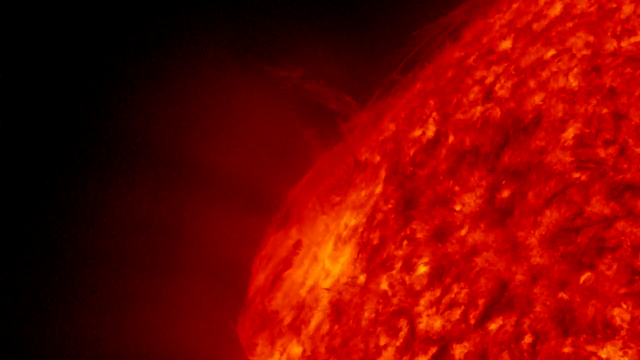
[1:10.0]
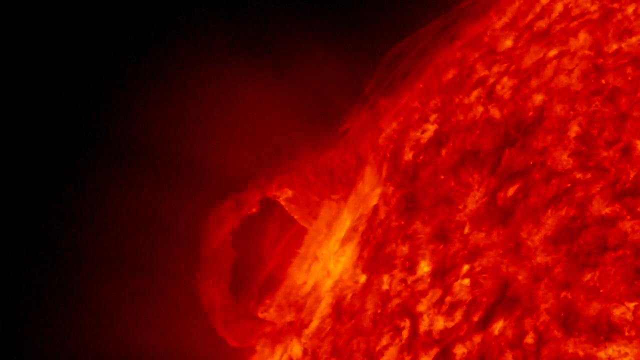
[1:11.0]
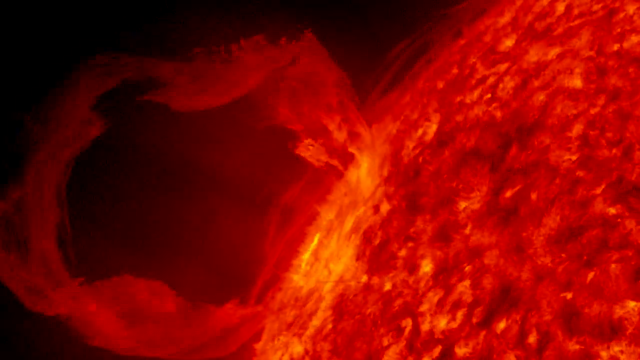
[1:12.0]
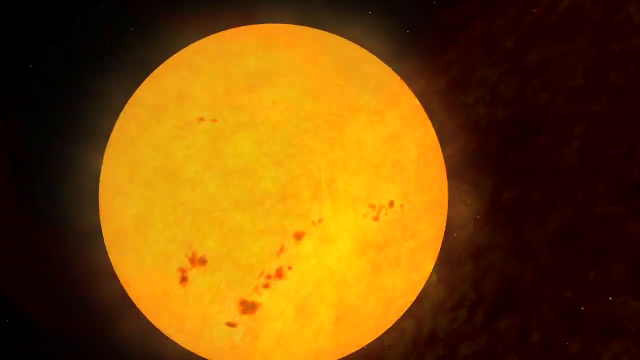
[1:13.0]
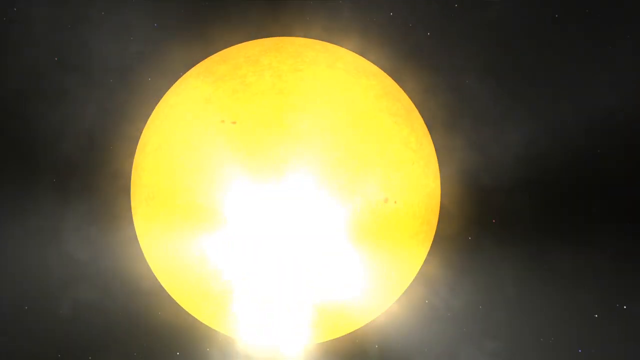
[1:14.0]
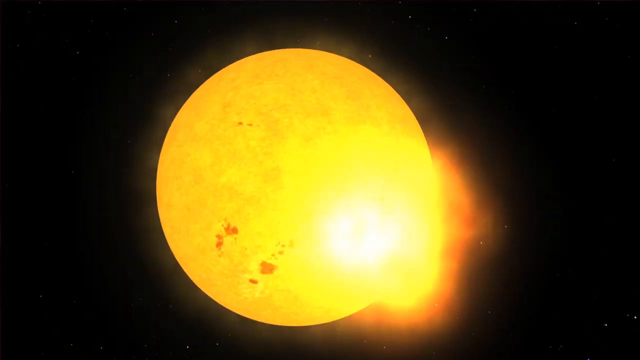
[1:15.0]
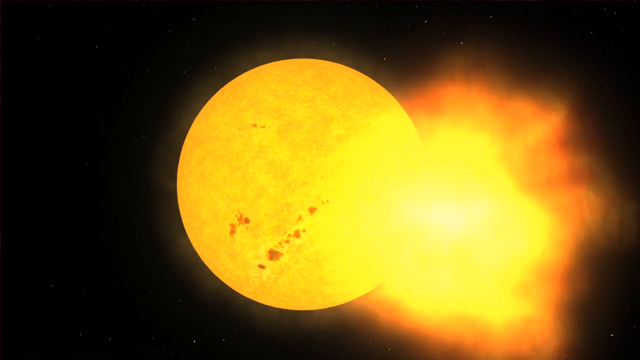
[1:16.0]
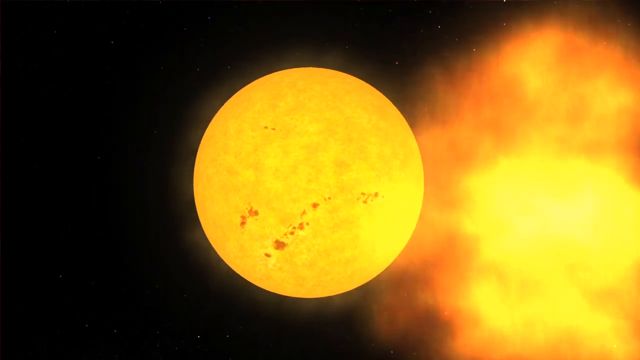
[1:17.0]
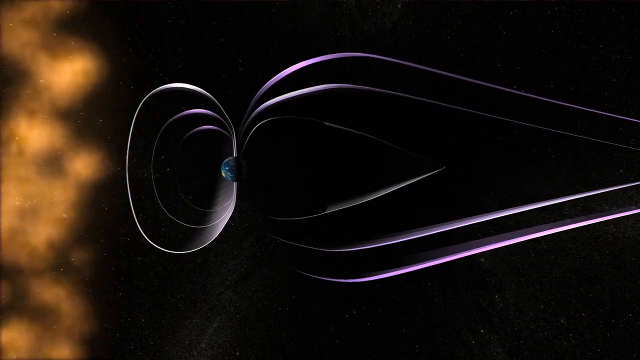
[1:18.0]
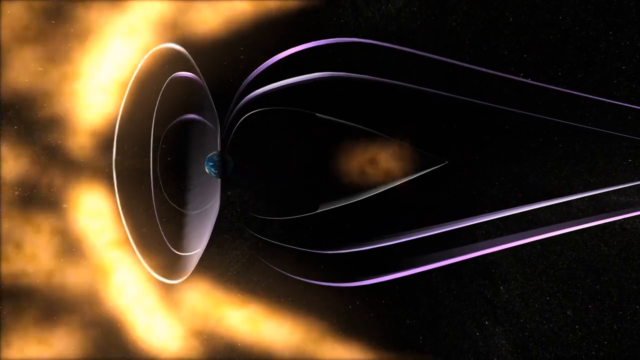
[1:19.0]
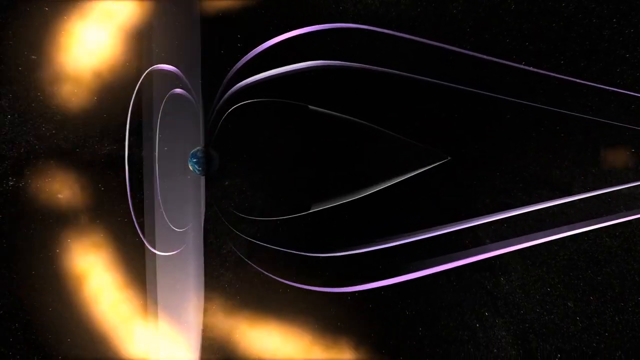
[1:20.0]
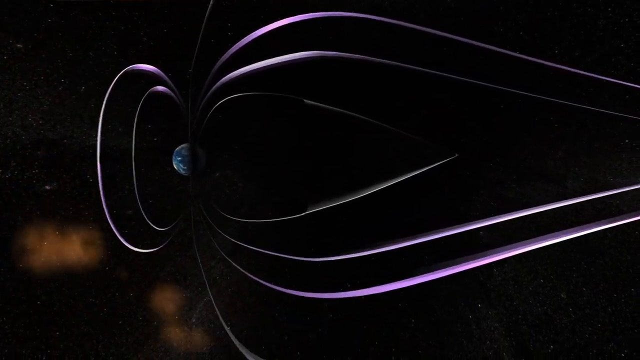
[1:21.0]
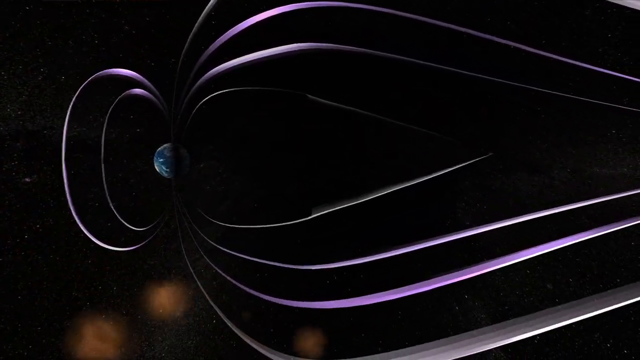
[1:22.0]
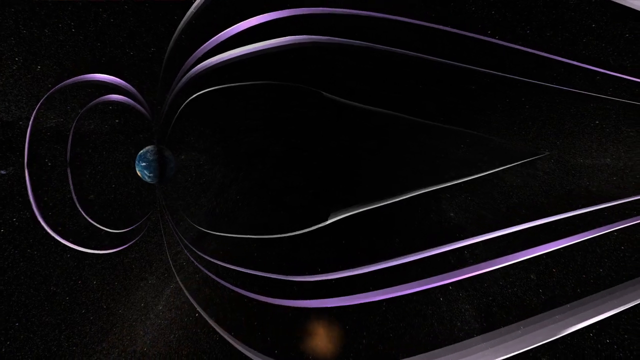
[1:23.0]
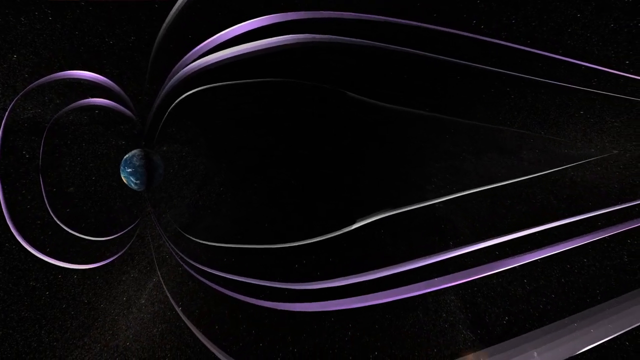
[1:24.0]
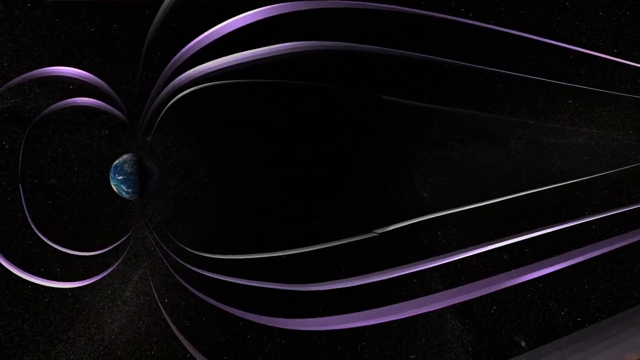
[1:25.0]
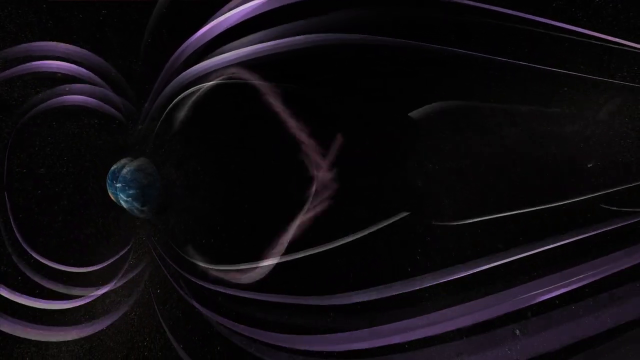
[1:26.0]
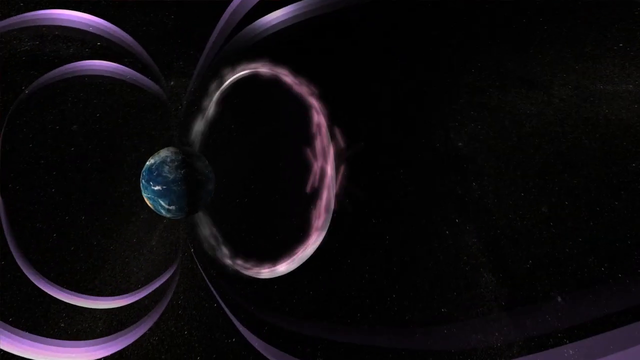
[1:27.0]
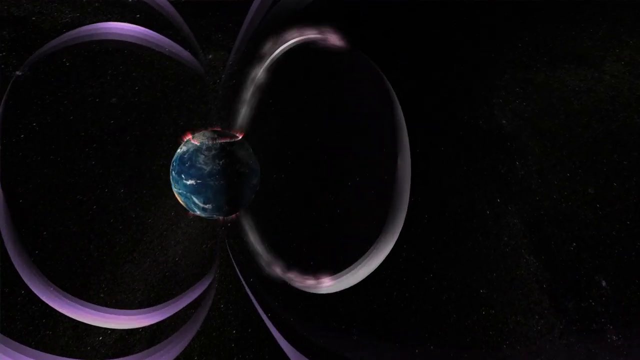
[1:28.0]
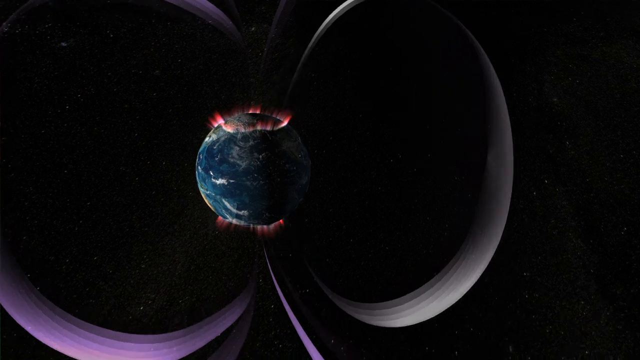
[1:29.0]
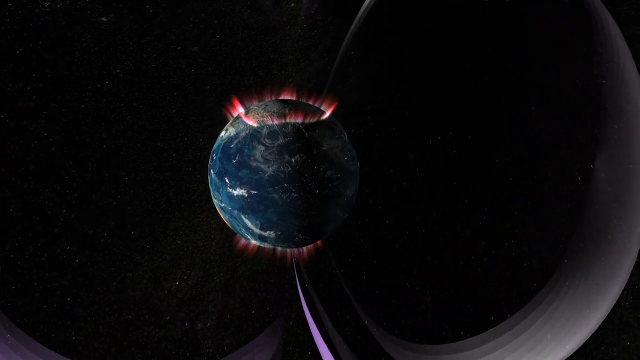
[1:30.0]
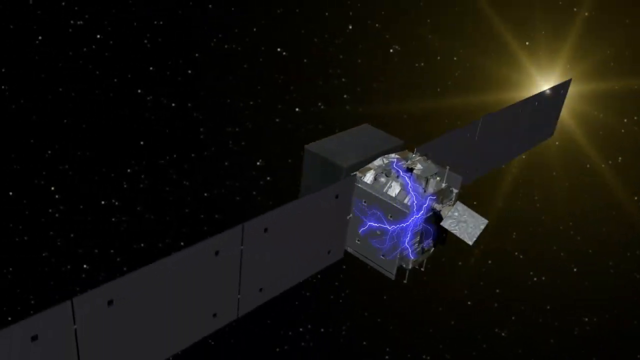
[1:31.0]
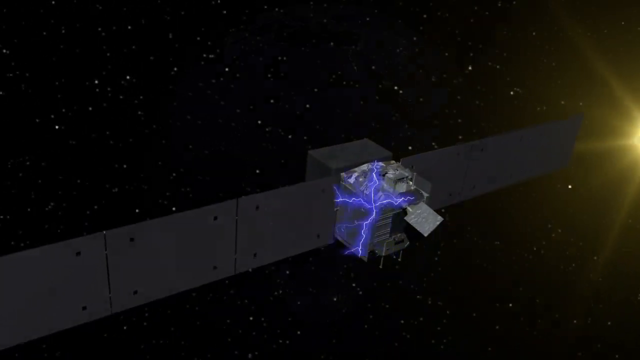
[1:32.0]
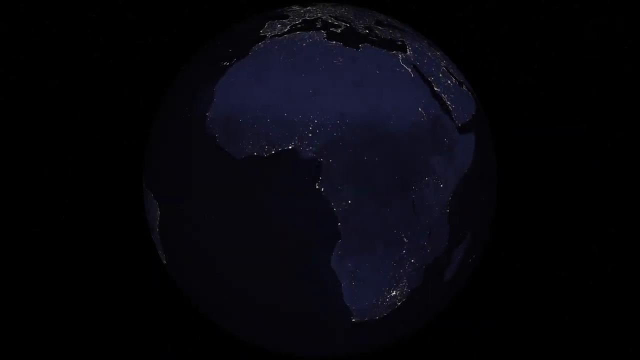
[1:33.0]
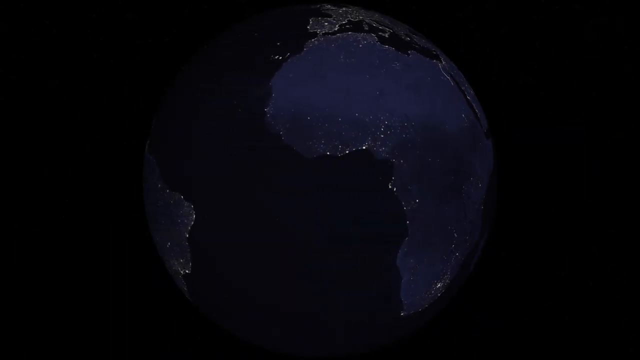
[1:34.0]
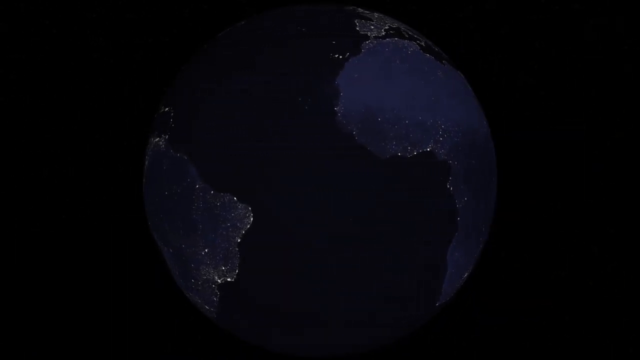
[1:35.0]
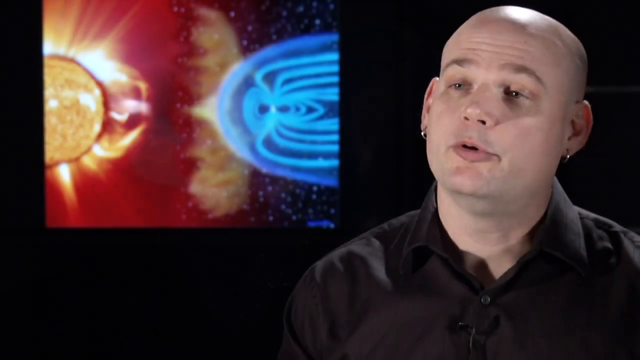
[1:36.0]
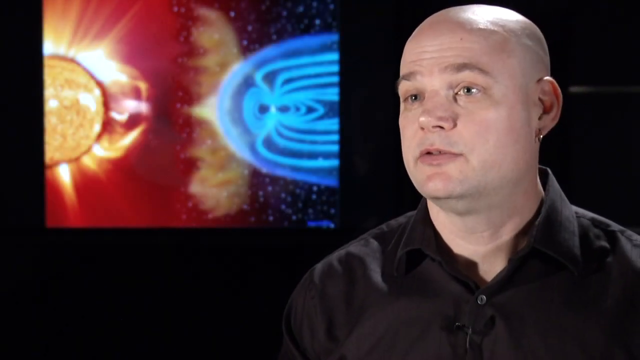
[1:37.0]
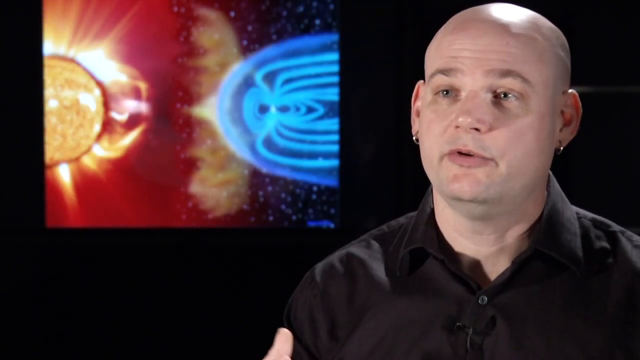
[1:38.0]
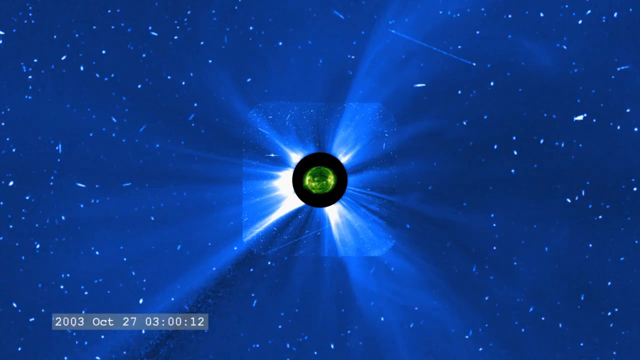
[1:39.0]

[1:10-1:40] A very large, very close view shows a corner area of the sun on the right side, red and orange, with a massive solar flare coming from the bottom center. The scene changes to a yellow sun directly in front of the viewer with some dark spots on it. A different view of the Earth follows: huge solar flares come from the left side, and something like a shield on the Earth's left side, made of rings like a small shield, deflects them, protecting the Earth. On the right side, large lines extend to the right. The camera zooms in closer toward the Earth, which is on the left, and a light purple ring forms on the right side of the Earth. The Earth's North and South Poles then illuminate with some sort of pink or purple ring. The scene changes to a satellite floating through space with blue lightning on its back. Then a globe of the Earth rotates to the right, followed by the man talking on the right side.